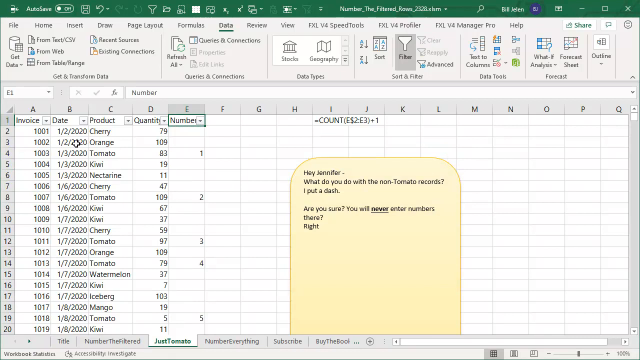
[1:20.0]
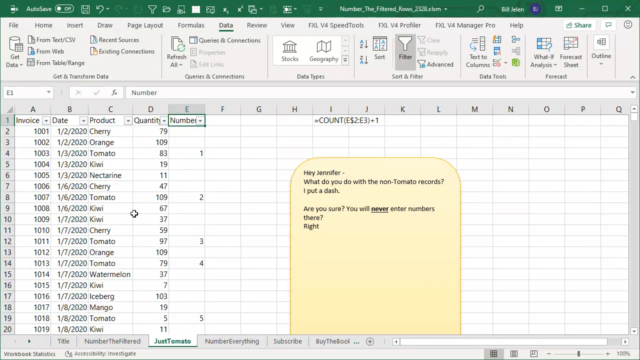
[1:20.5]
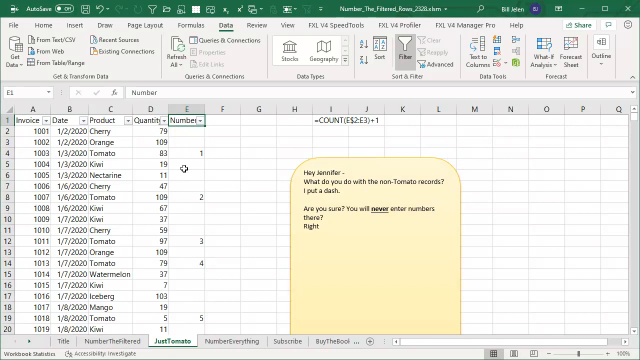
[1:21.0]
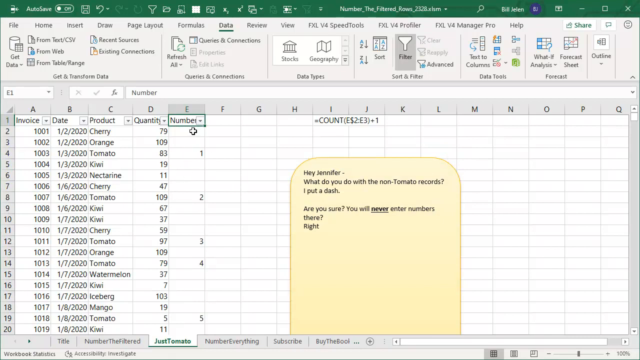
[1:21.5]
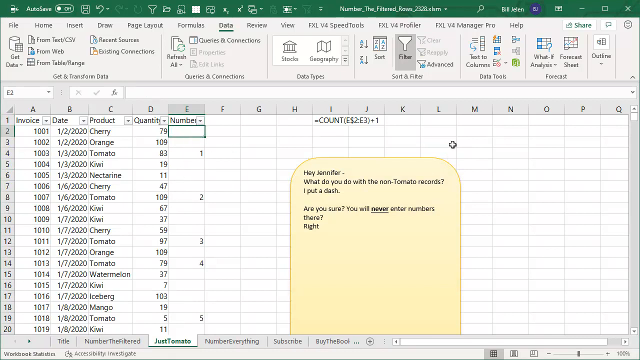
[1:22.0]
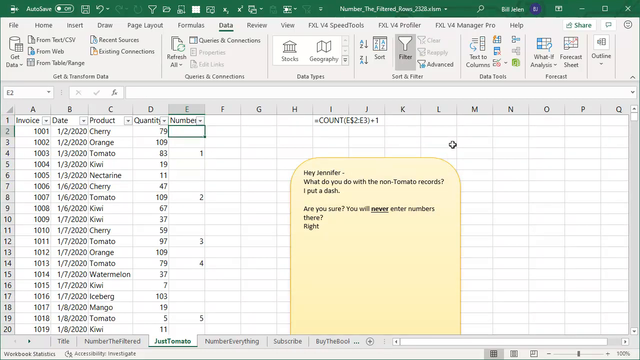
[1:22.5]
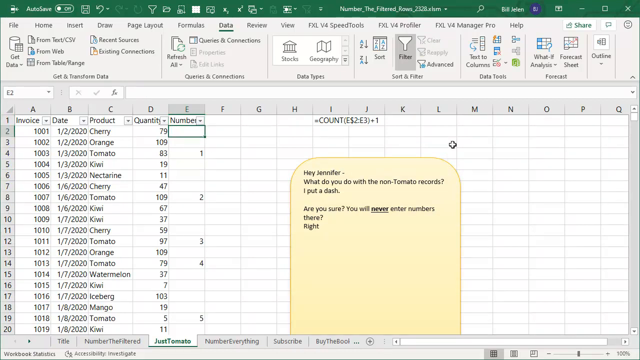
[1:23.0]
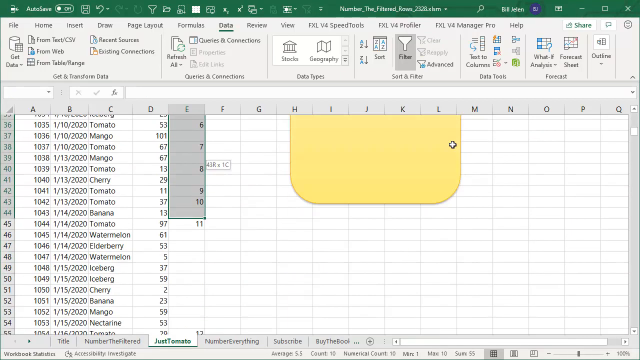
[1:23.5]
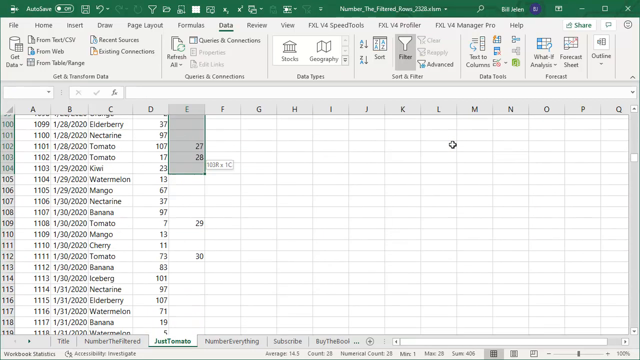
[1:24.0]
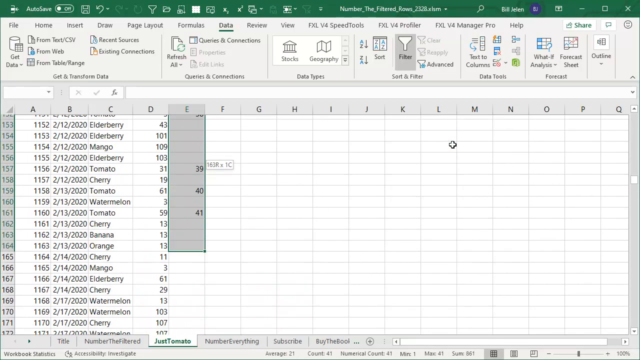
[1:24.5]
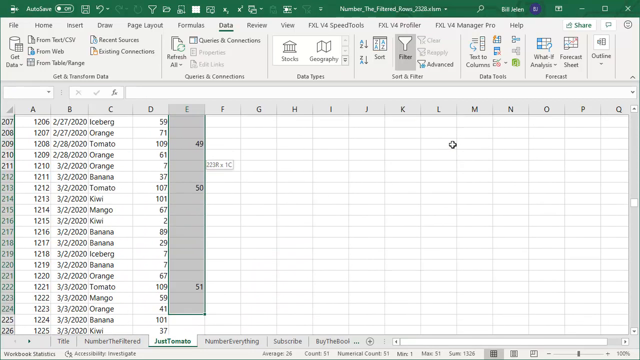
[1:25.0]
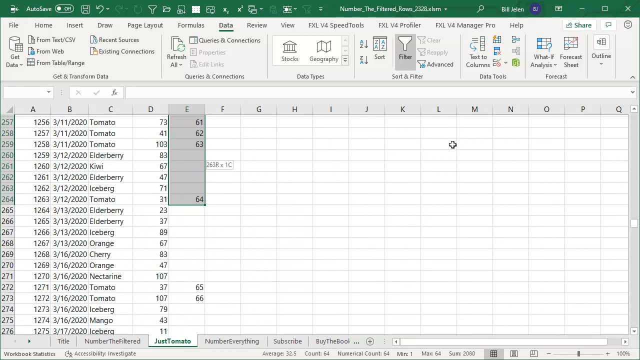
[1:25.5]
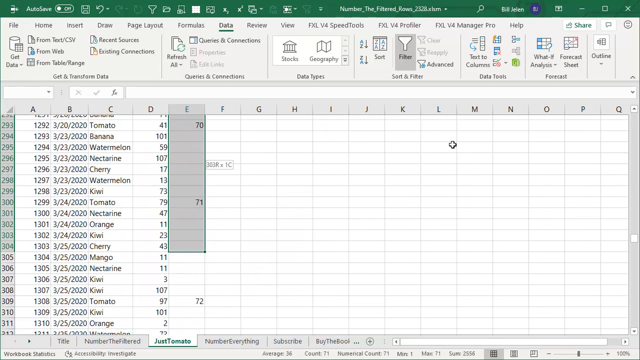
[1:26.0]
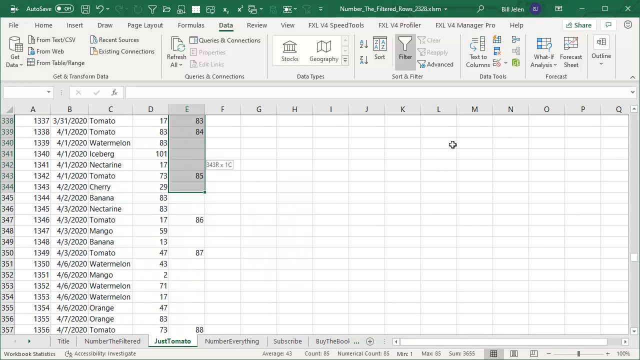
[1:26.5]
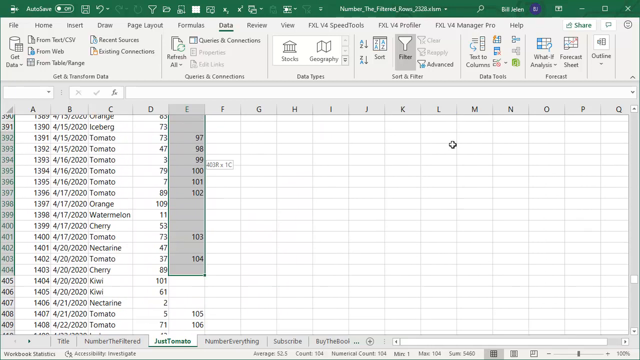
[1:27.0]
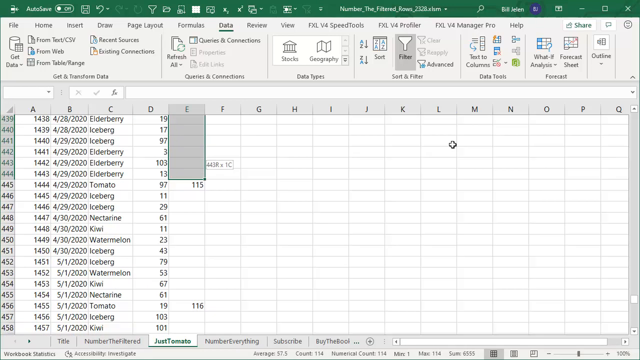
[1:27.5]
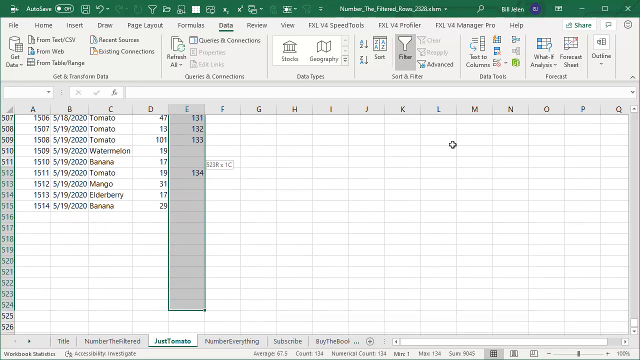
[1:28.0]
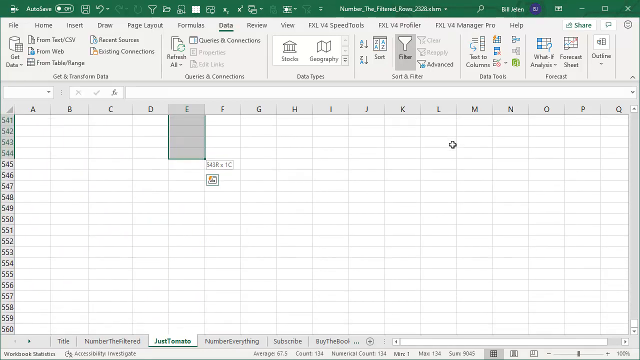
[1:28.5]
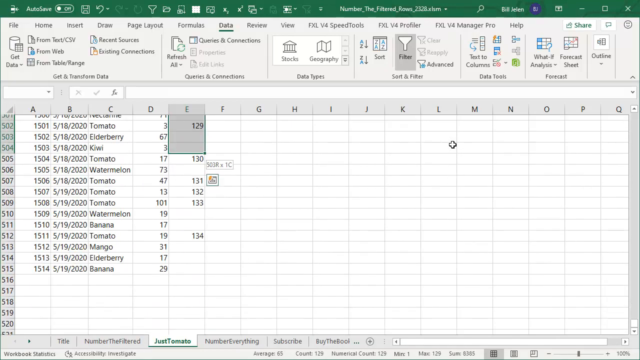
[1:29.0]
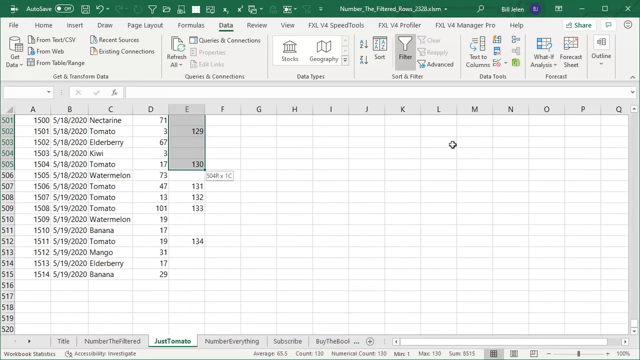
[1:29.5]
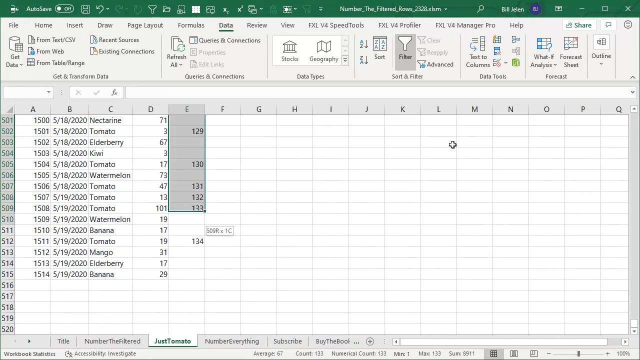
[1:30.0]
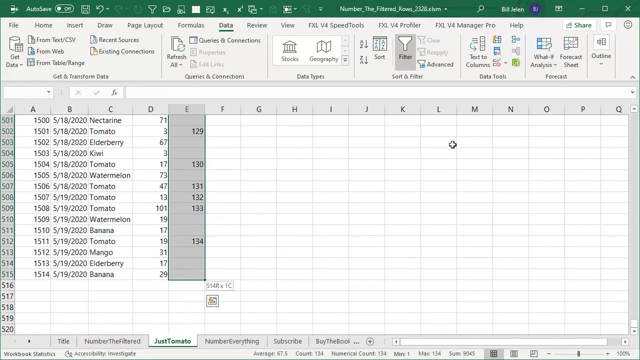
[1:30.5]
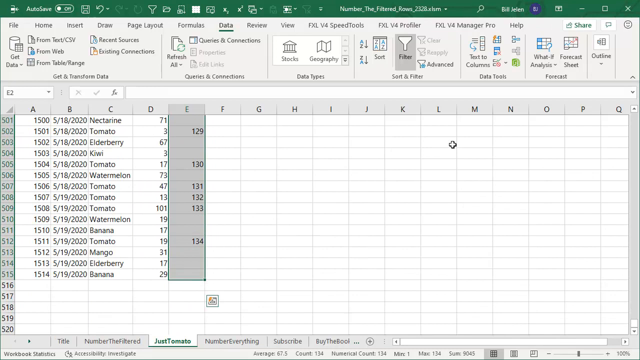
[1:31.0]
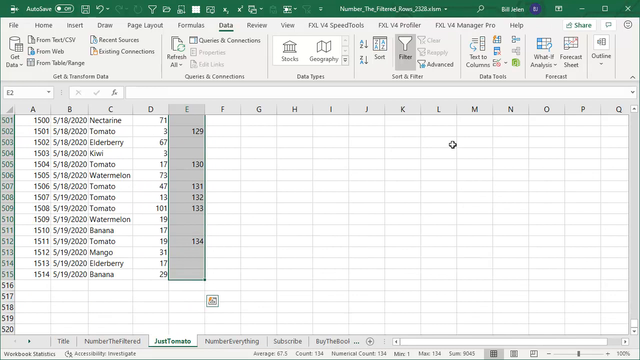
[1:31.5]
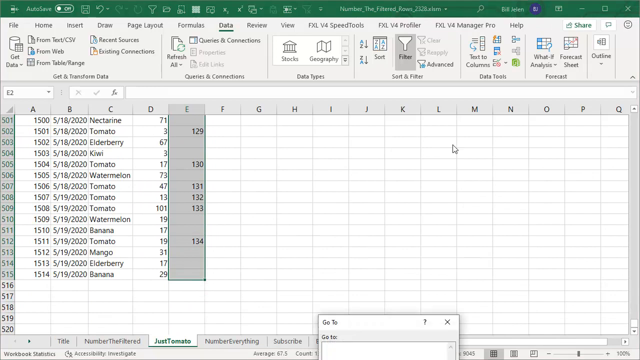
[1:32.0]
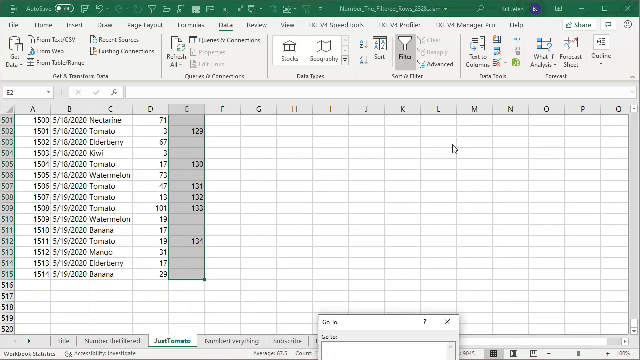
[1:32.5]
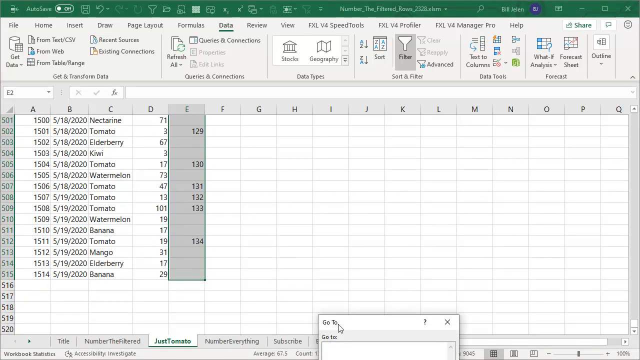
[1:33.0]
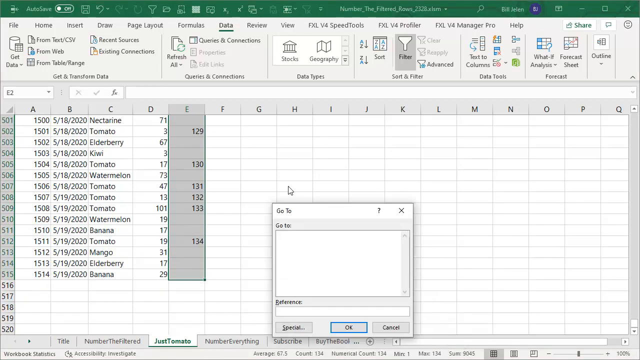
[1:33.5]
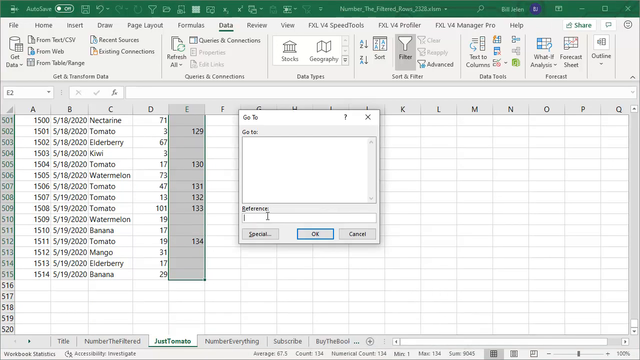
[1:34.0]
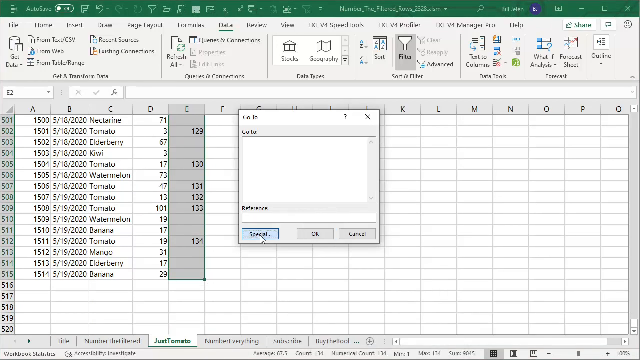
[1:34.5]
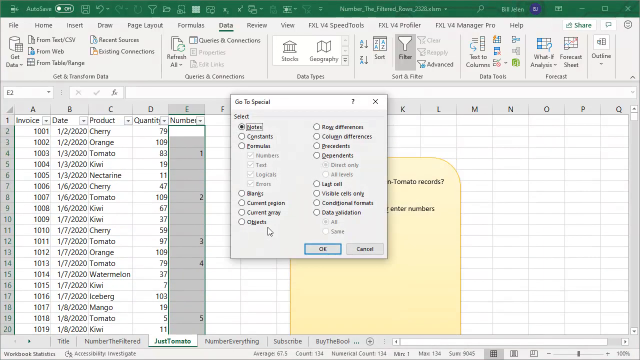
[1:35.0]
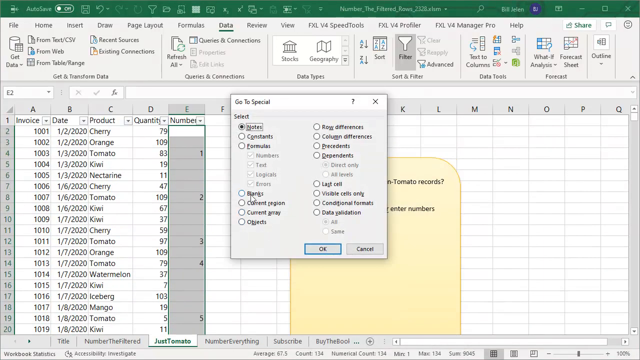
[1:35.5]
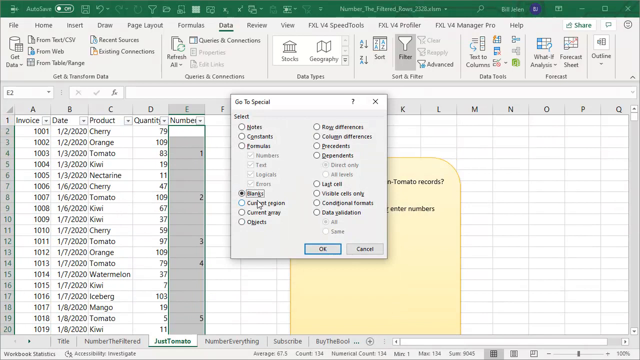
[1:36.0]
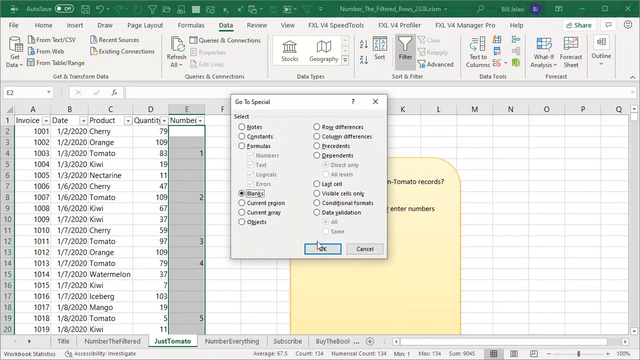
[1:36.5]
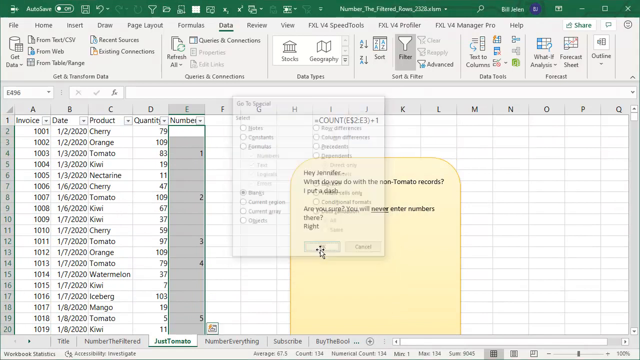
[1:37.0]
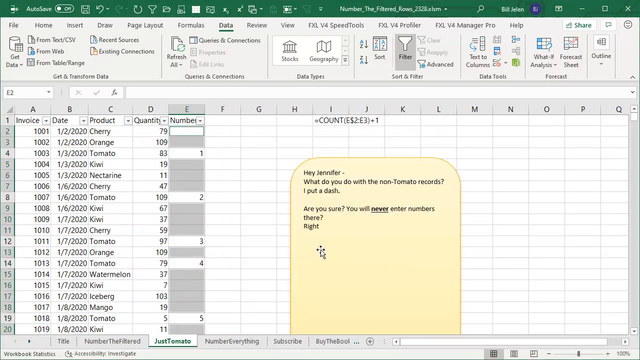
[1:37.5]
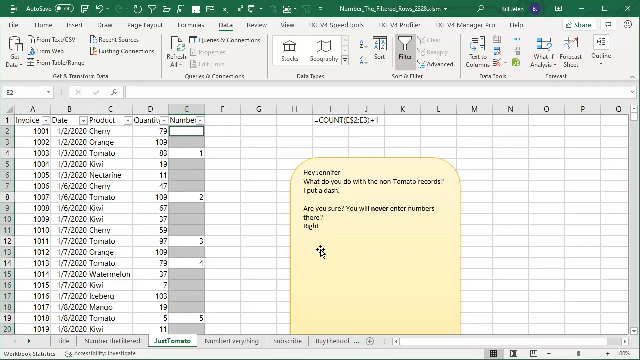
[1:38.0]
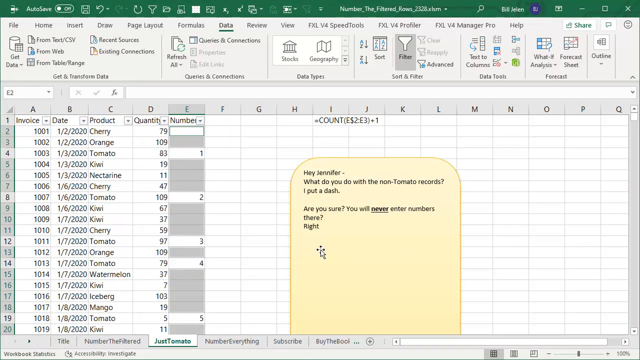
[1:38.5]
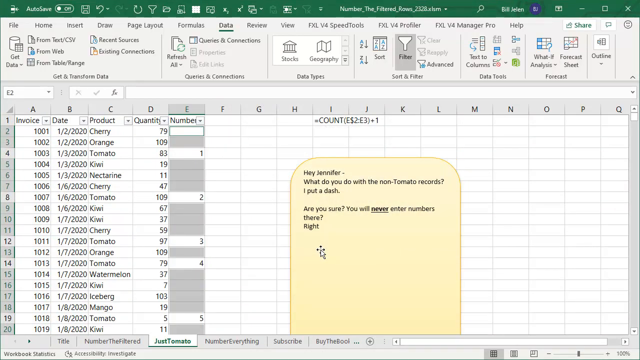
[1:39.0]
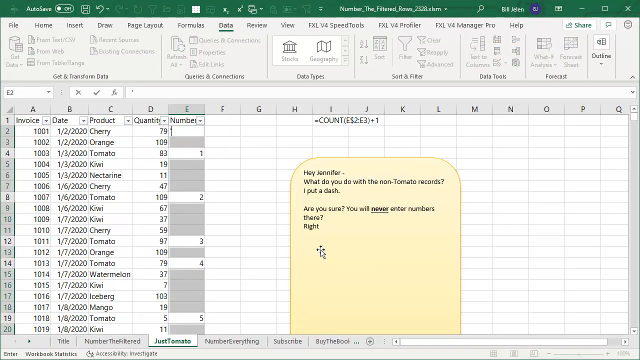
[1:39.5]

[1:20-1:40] He moves the cursor around left and right, then clicks below the number drop-down on E2. He scrolls all the way down, highlighting the E column in gray with a green border, down to row 515, the last row, which includes banana and the date 5-19-2020. At the bottom a "go to" box is cut off, so he uses the cursor to pull it up toward the center. He clicks "special," and a pop-up appears with "go to special" in its header. Notes is currently selected with a black circular option button; he clicks blanks instead, and a black dot appears to its left. At the bottom of the pop-up are an OK button with a blue border and a cancel button to its right. He clicks OK, and some cells turn gray while others are white; apparently all the cells without data are gray except the active cell, and all those with data are white. He then apparently types a dash in E2.